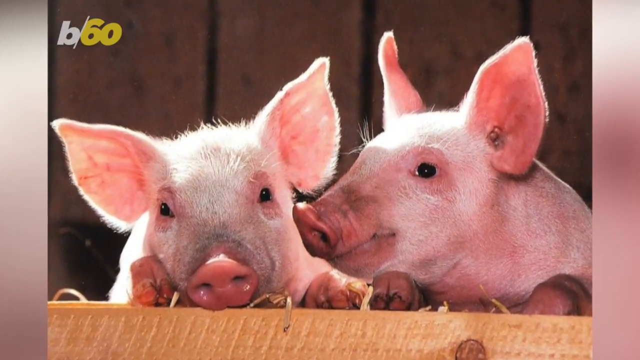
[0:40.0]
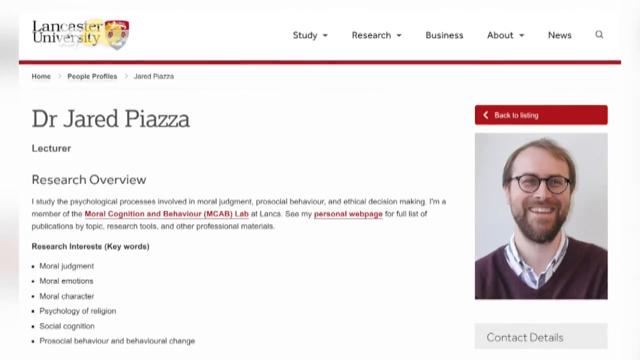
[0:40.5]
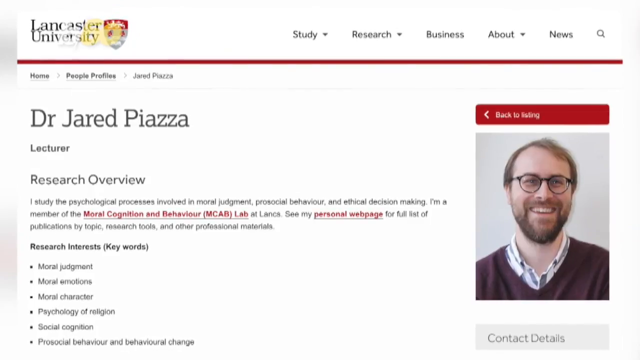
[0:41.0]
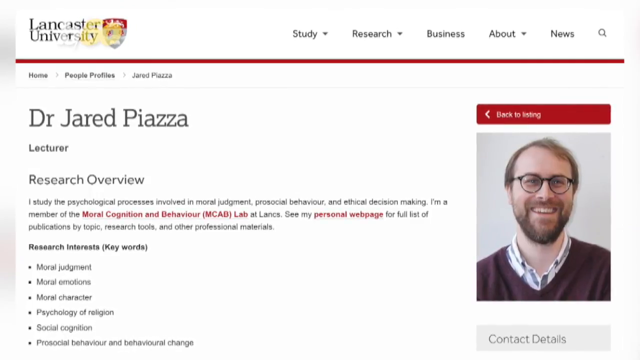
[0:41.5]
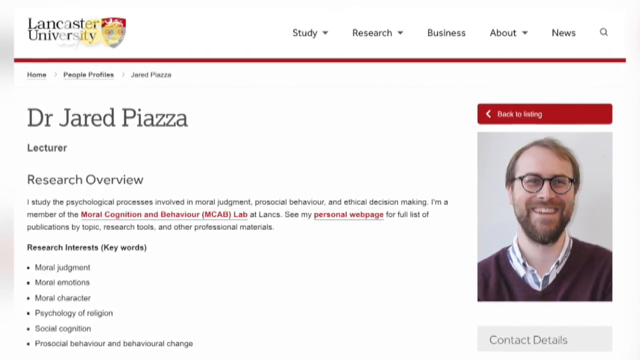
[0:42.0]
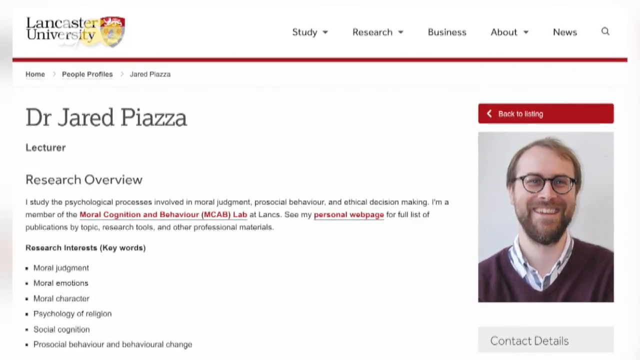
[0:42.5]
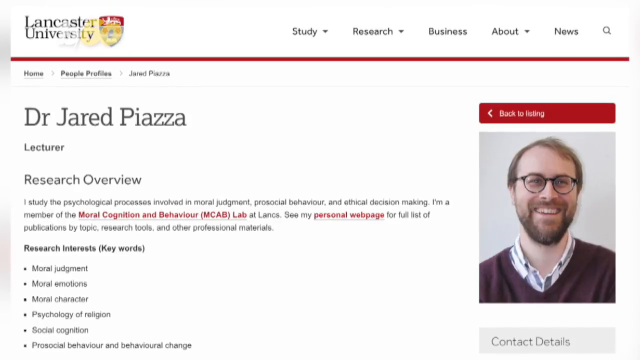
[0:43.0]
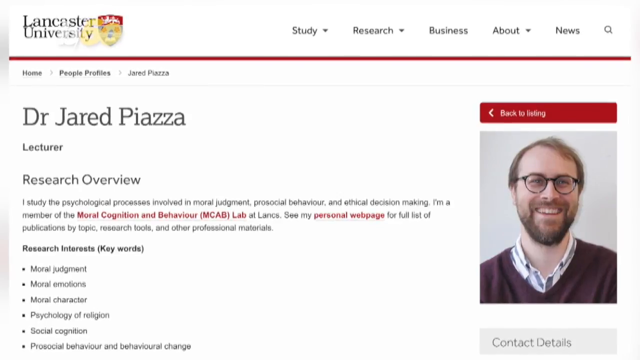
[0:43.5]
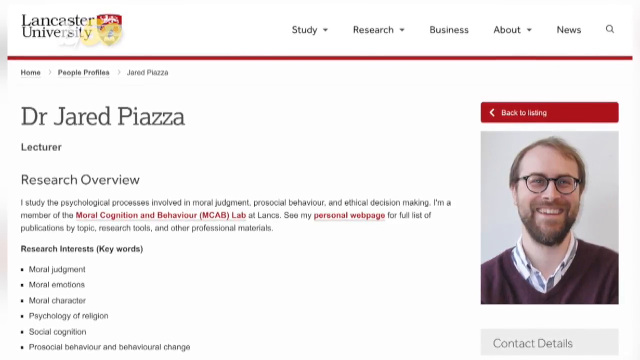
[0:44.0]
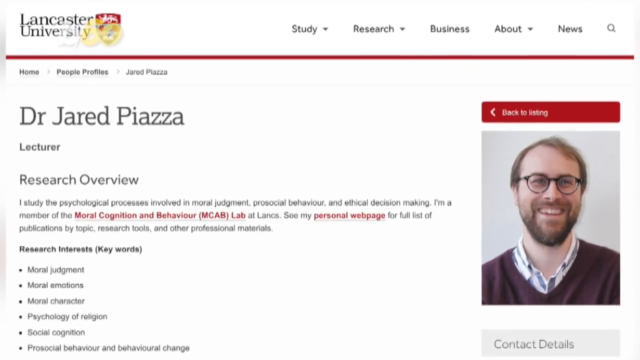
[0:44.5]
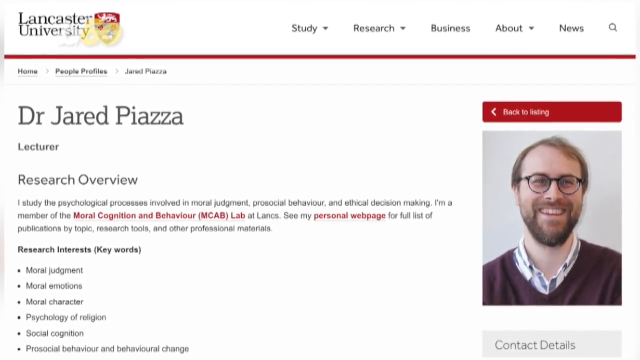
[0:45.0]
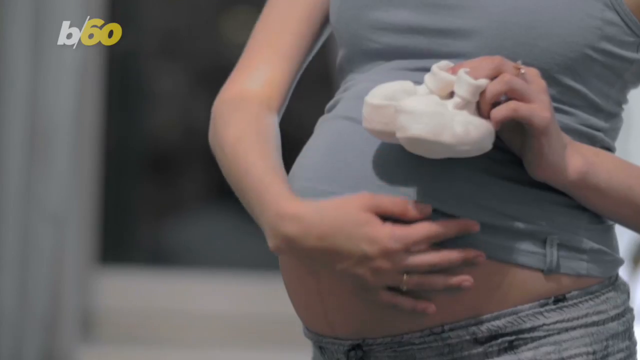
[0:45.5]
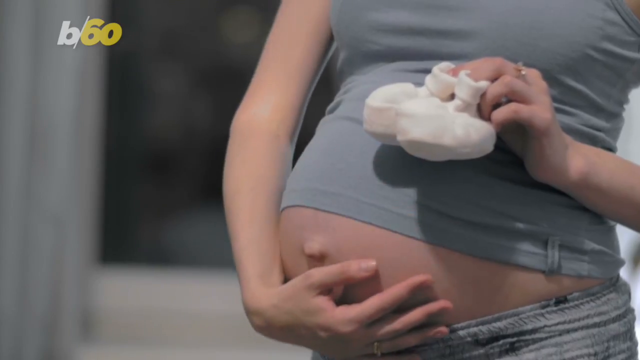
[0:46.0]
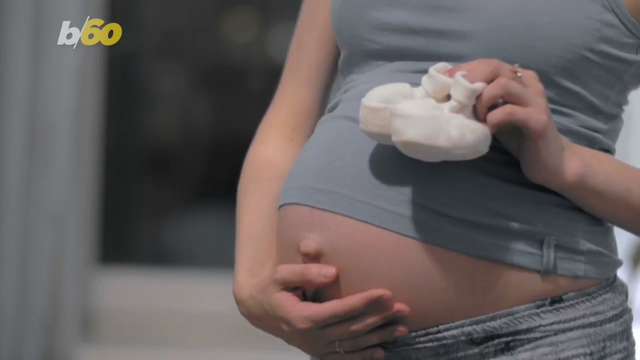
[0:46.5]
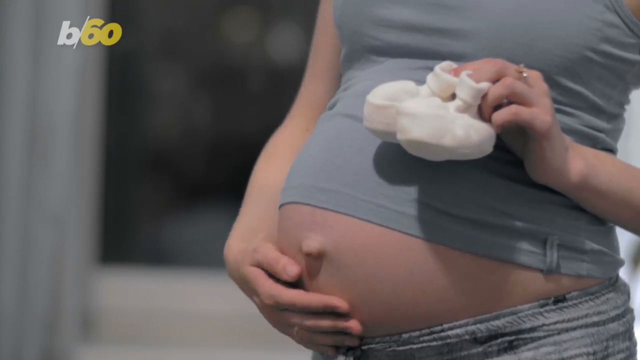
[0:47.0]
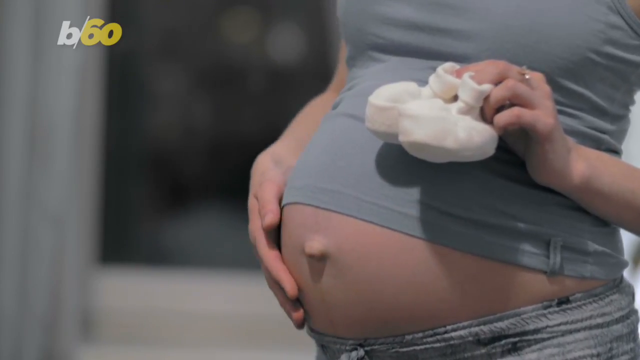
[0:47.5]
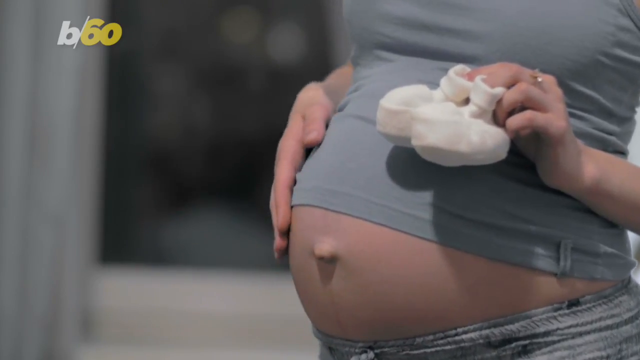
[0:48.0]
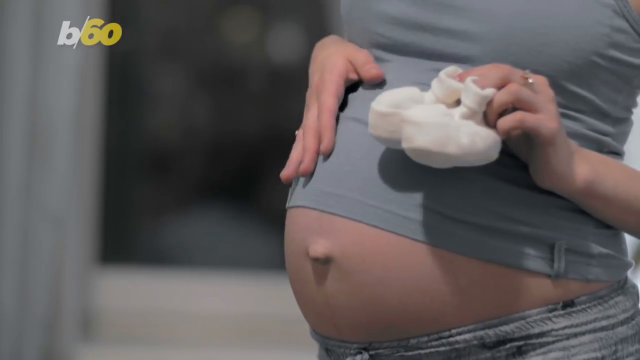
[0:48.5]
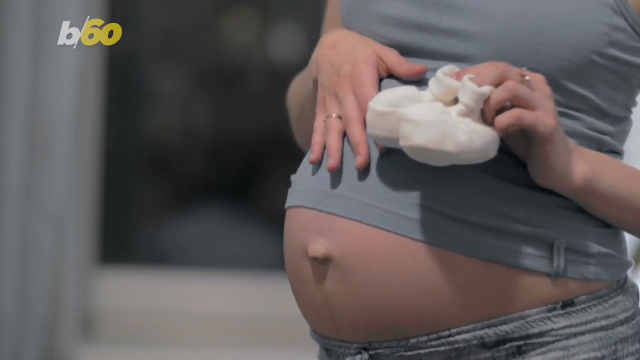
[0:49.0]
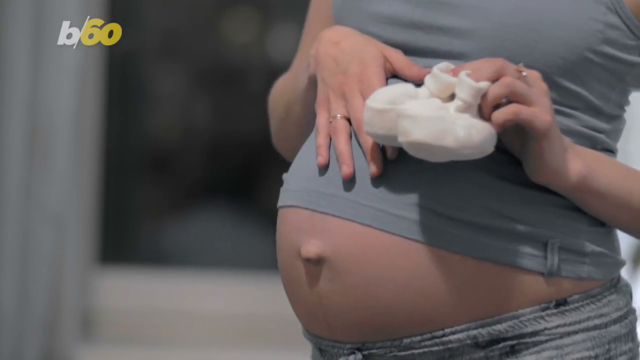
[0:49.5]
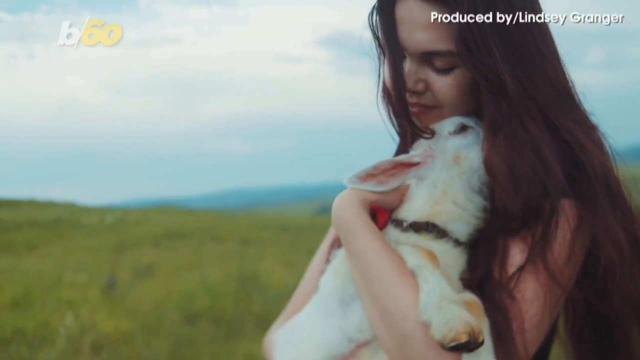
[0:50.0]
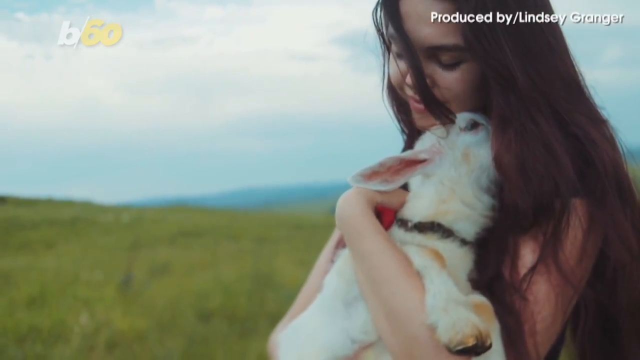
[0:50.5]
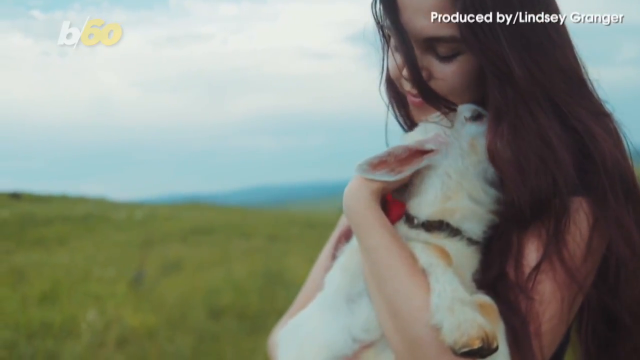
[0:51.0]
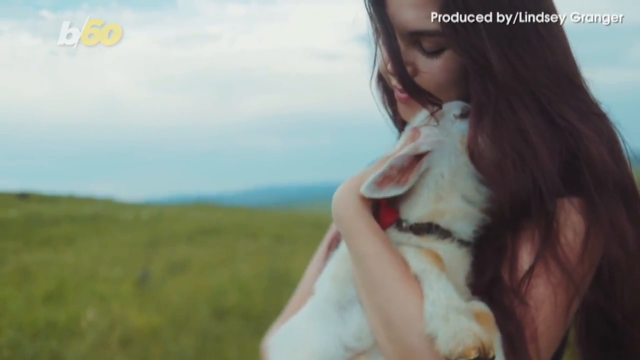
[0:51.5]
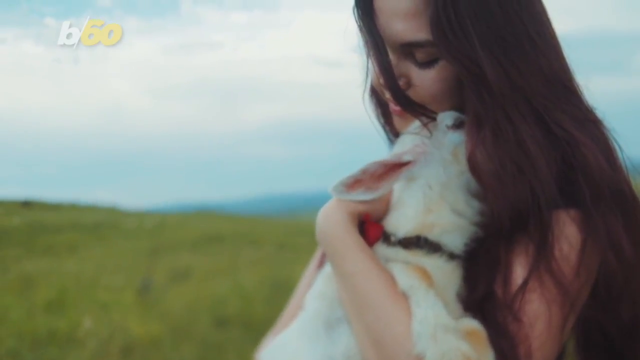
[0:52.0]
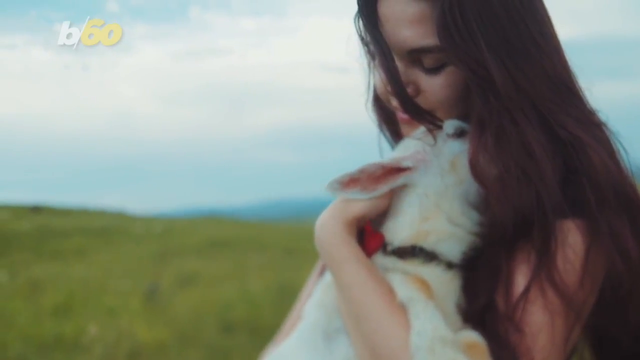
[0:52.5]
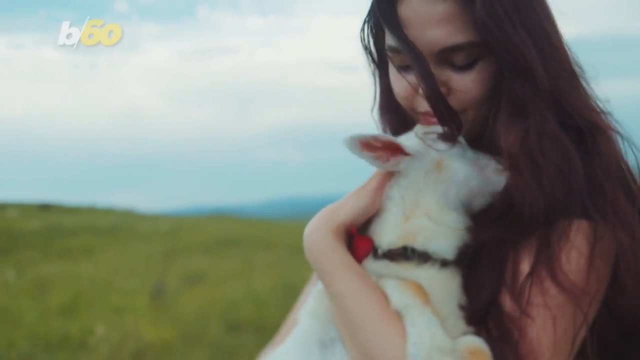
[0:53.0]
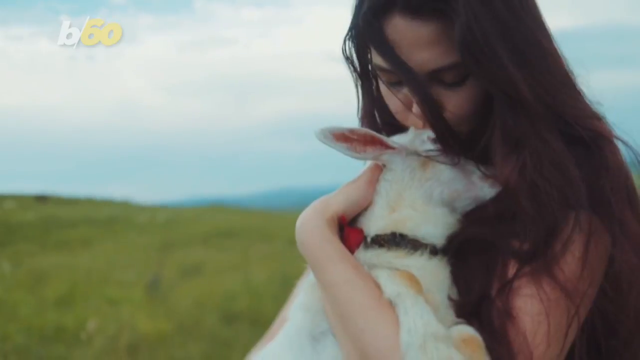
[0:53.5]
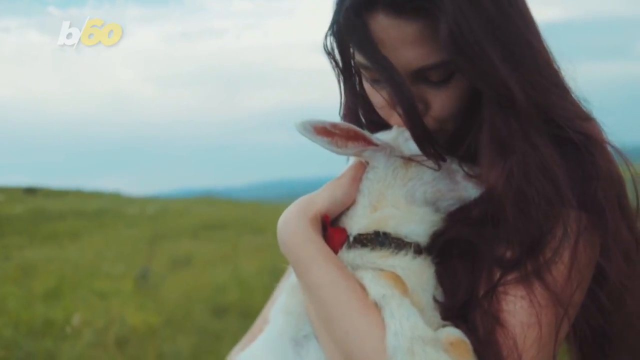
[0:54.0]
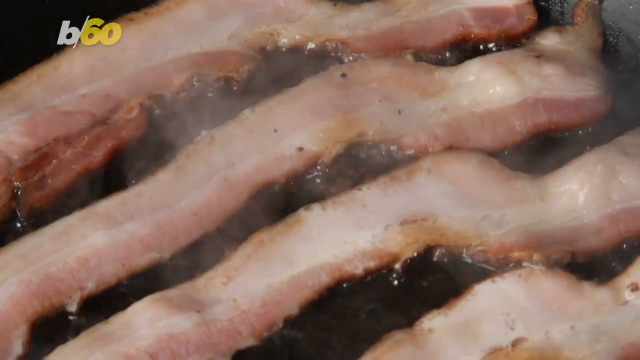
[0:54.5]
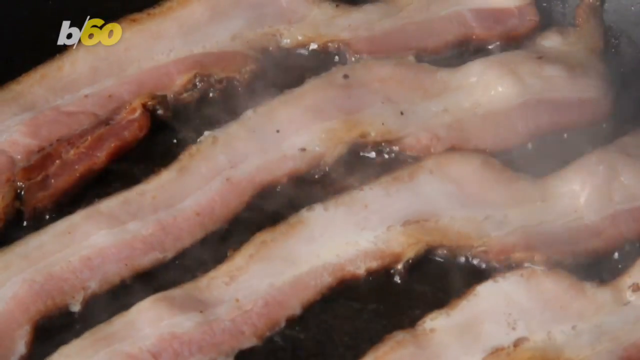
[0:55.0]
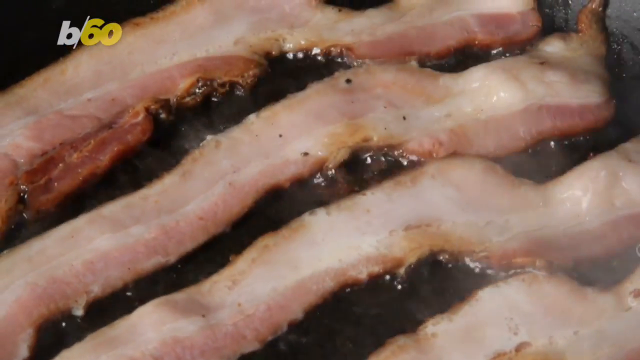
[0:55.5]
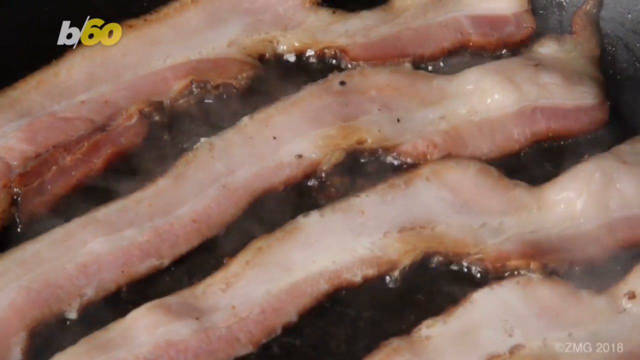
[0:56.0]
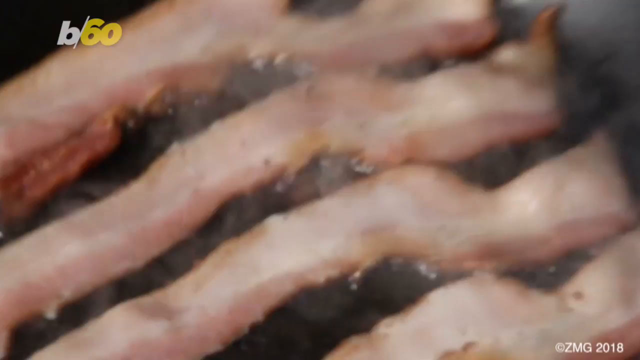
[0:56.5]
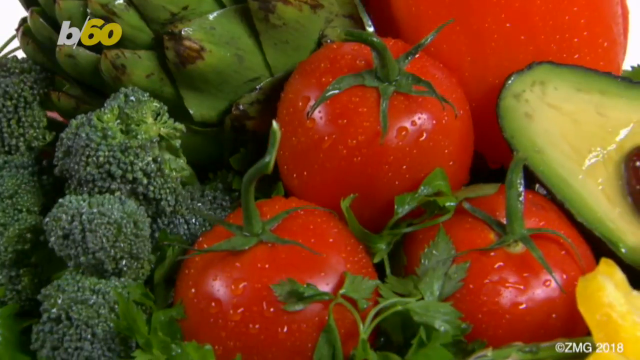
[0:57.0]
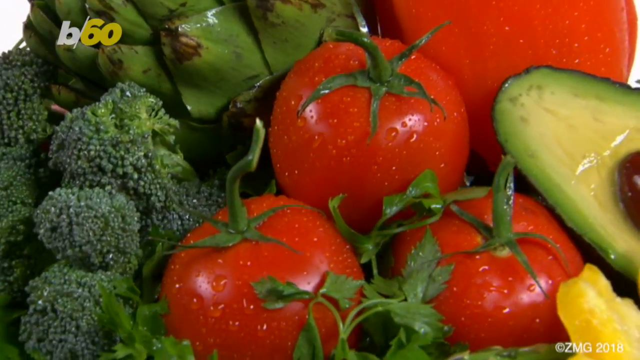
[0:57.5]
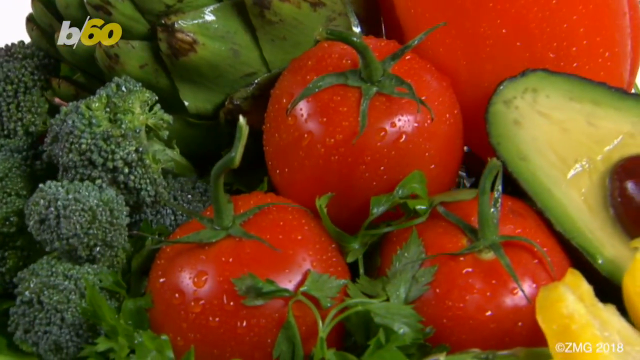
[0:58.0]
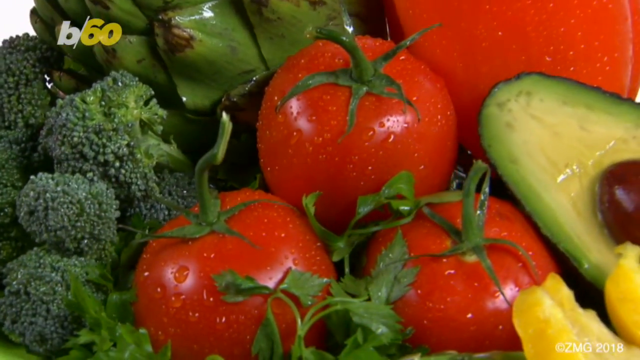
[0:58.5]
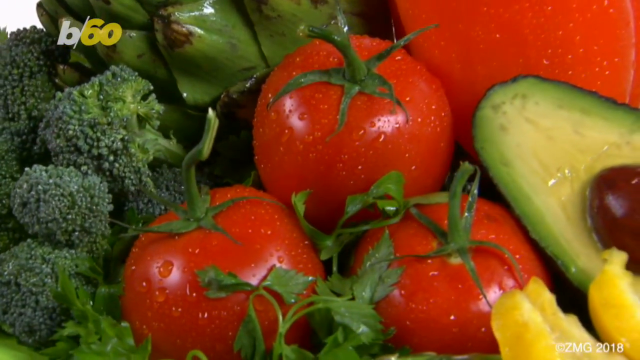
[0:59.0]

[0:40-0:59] Two pink little piglets seem to be close to each other. The video then moves to a report from the Lanchester University by Dr. Gerard Piazza. On the far right is a picture of a man with glasses, red hair and a beard, wearing a white t-shirt and seemingly smiling. The report includes written information about Dr. Gerard, who is a lecturer. Next, a pregnant woman seems to be rubbing her belly while holding the socks of a newborn baby. She wears a gray t-shirt and gray pants and seems to have a ring on her left finger, and she keeps rubbing her belly. In a new scene, a woman holds a little lamb, hugging and comforting it.